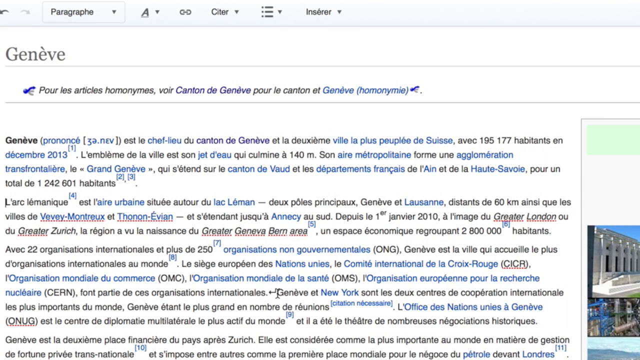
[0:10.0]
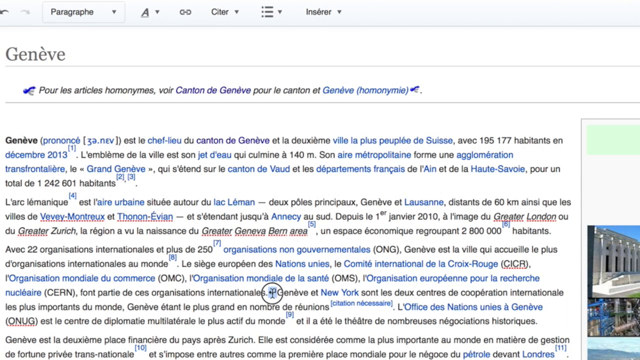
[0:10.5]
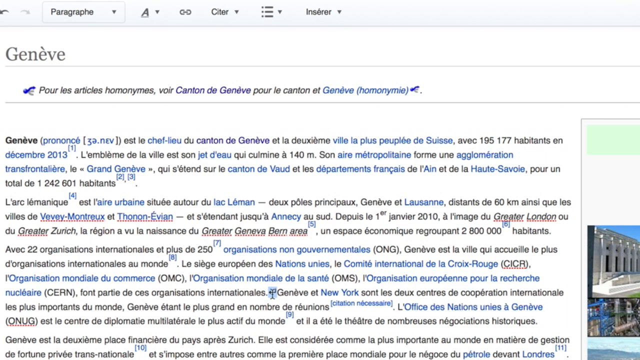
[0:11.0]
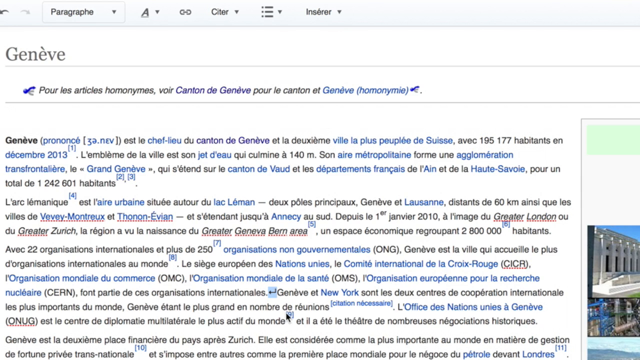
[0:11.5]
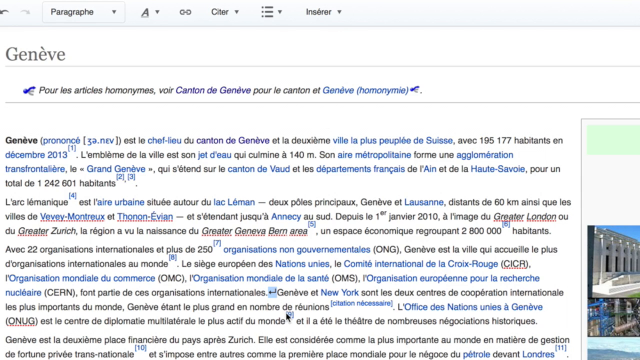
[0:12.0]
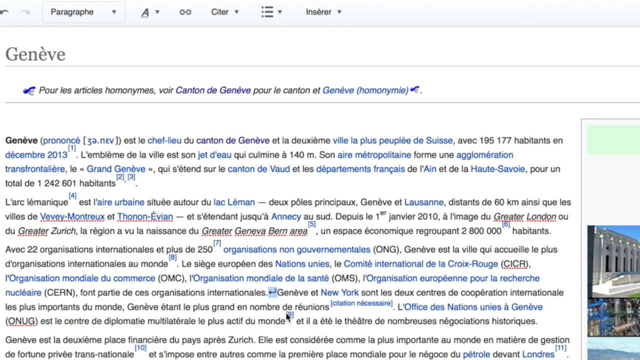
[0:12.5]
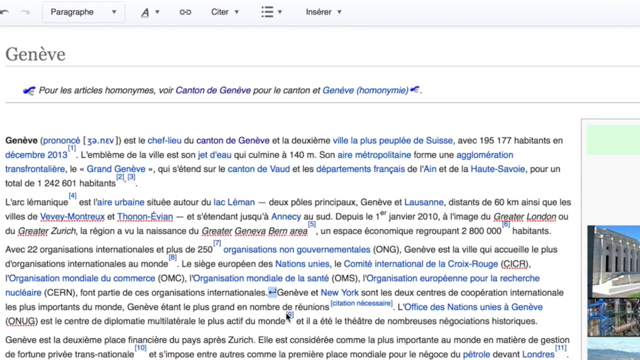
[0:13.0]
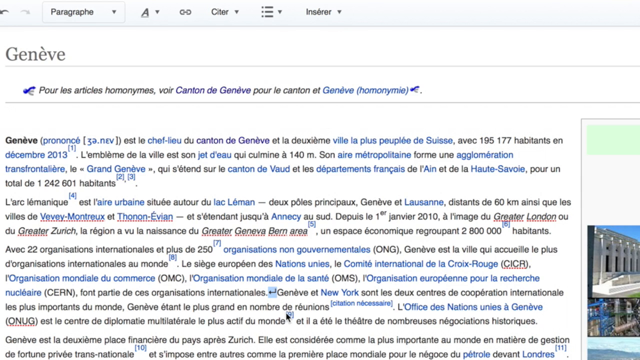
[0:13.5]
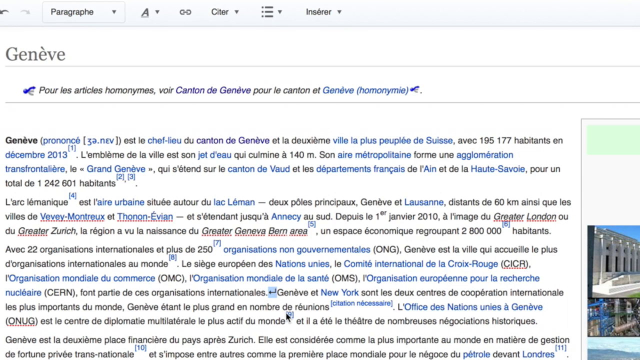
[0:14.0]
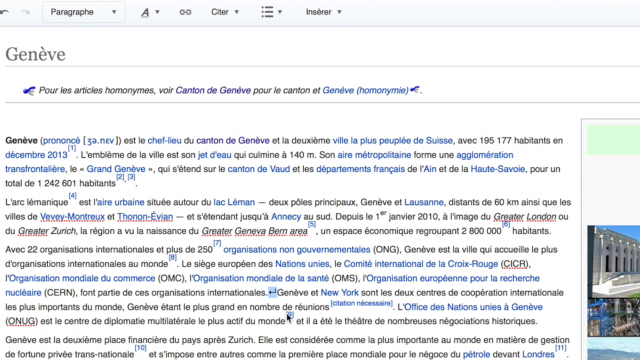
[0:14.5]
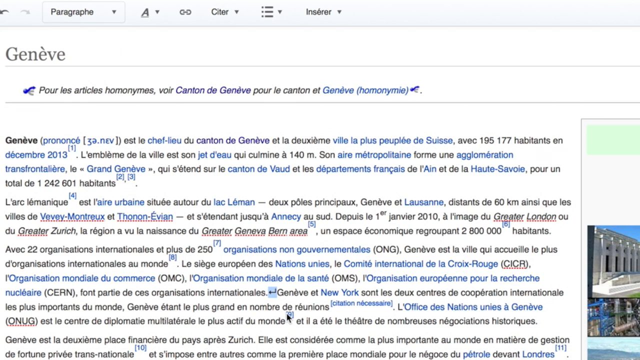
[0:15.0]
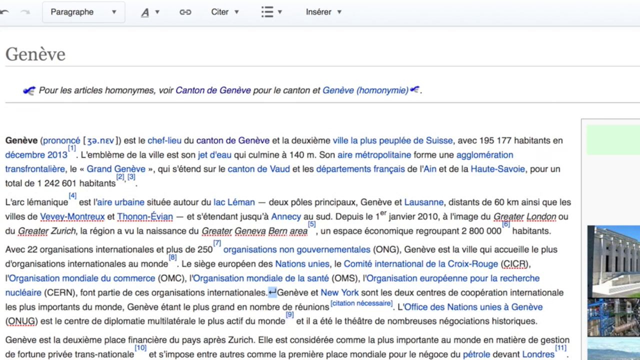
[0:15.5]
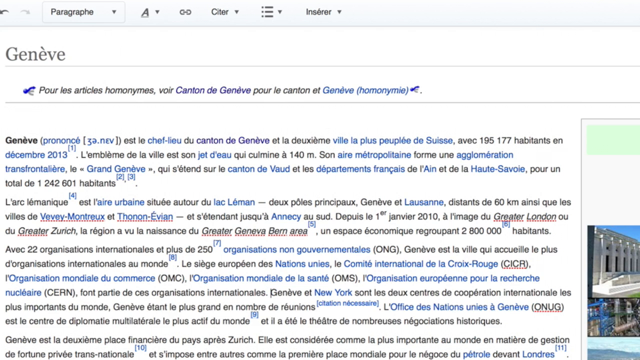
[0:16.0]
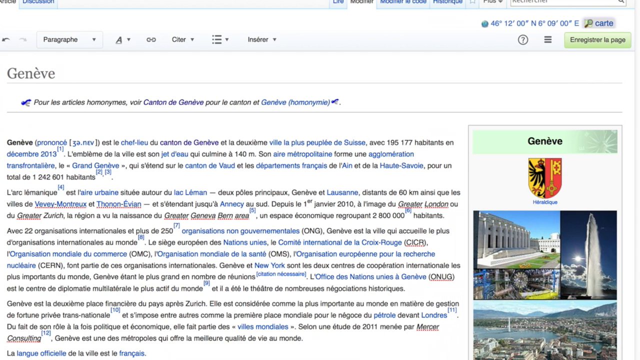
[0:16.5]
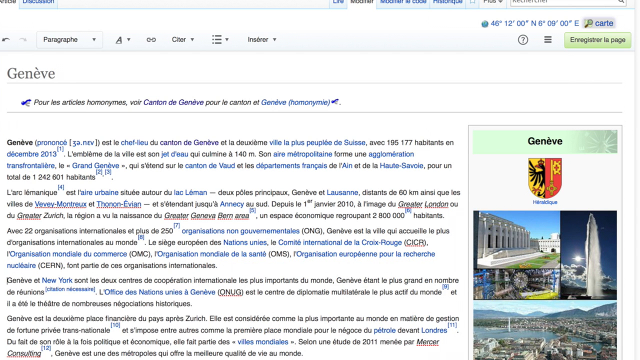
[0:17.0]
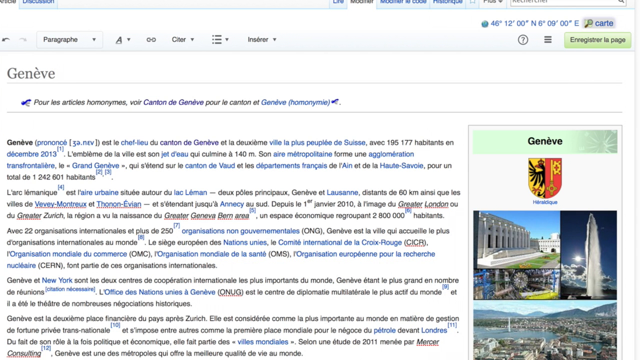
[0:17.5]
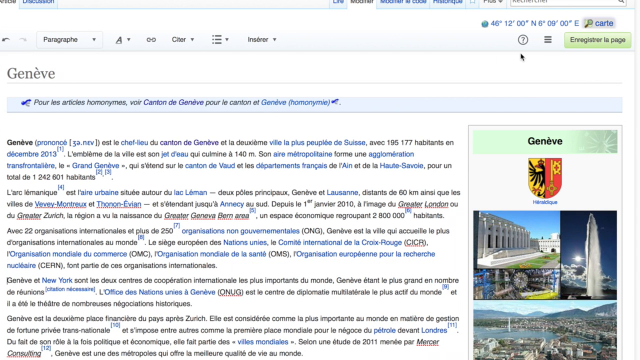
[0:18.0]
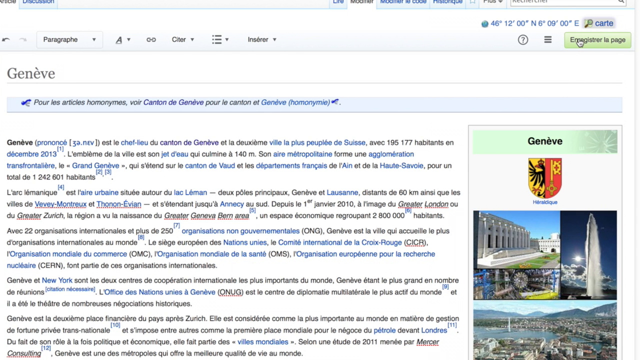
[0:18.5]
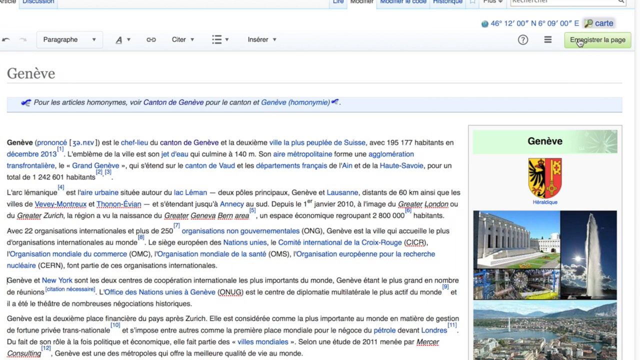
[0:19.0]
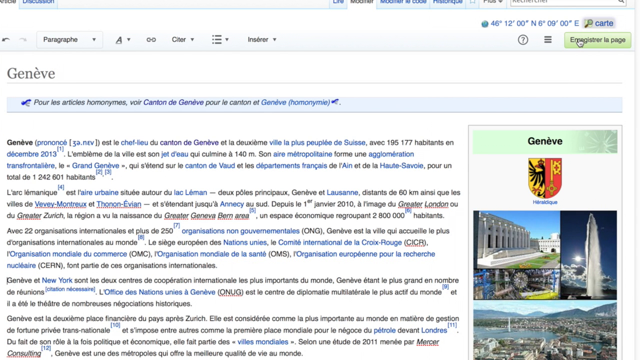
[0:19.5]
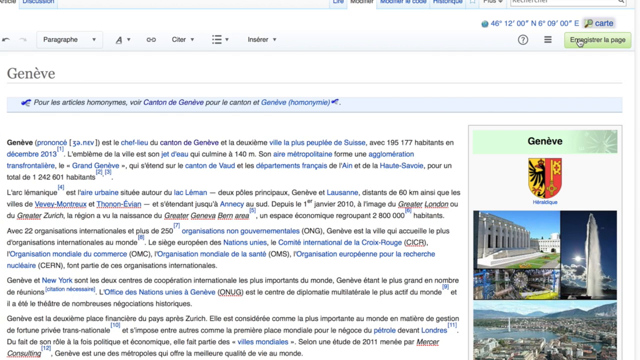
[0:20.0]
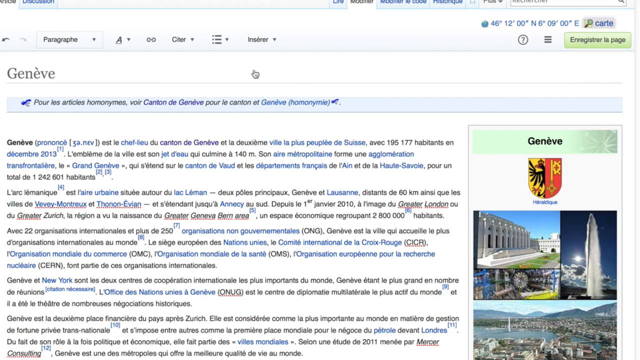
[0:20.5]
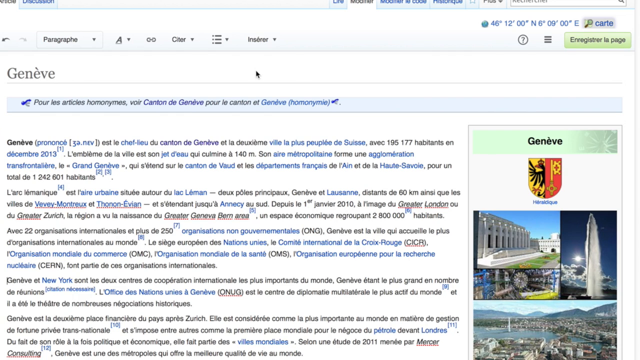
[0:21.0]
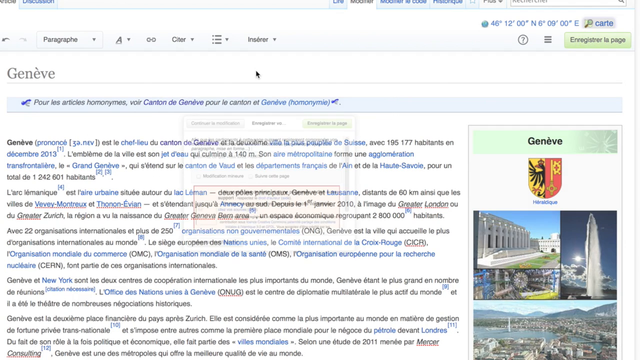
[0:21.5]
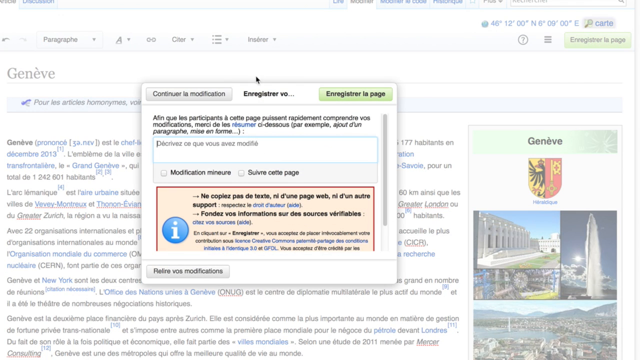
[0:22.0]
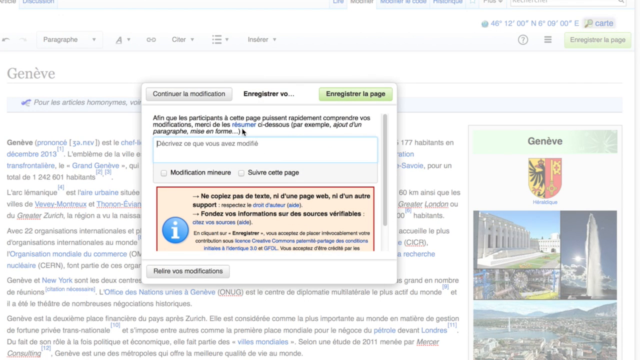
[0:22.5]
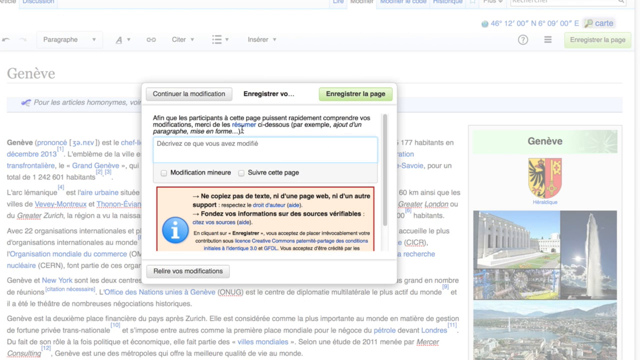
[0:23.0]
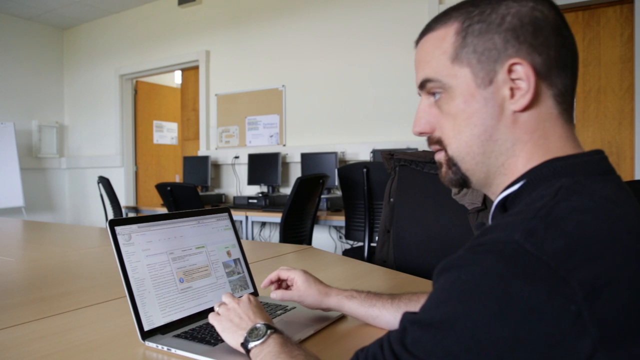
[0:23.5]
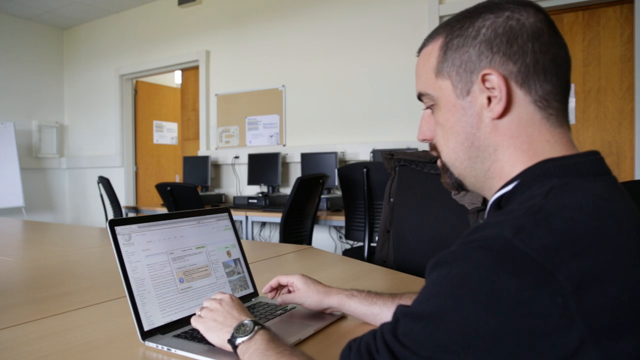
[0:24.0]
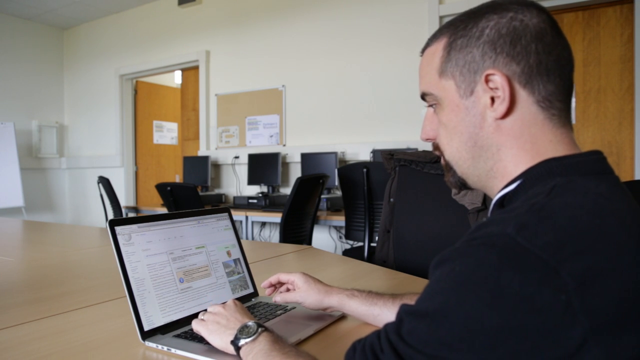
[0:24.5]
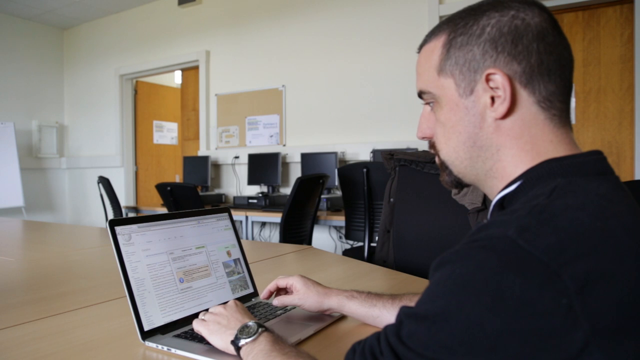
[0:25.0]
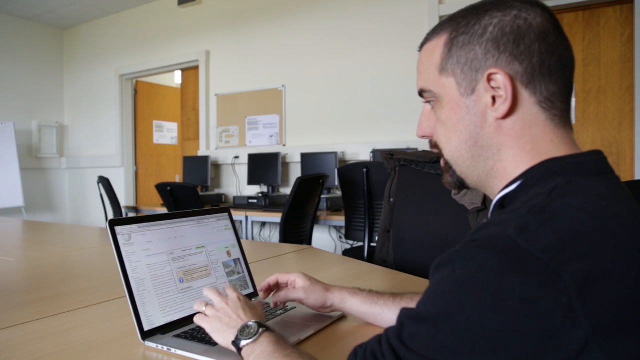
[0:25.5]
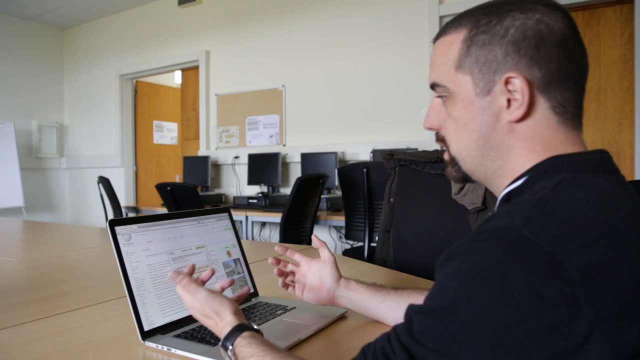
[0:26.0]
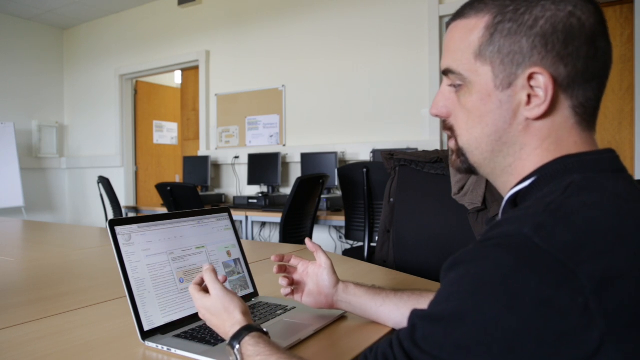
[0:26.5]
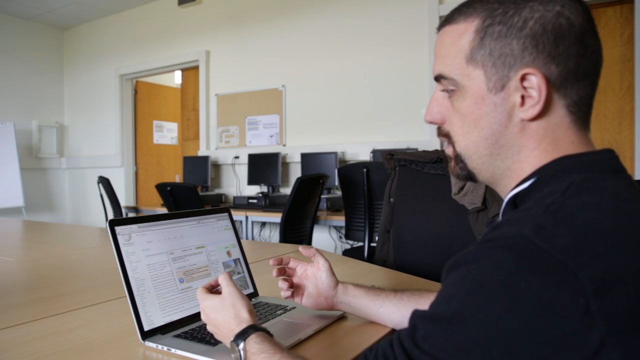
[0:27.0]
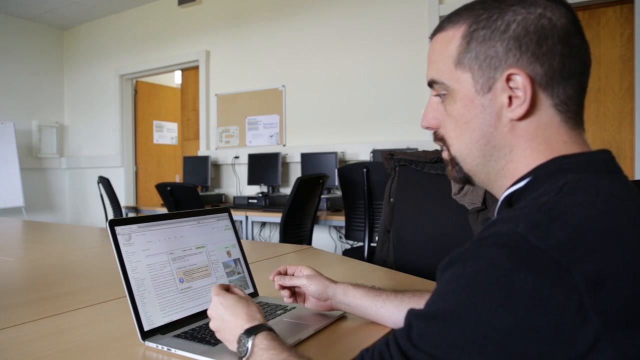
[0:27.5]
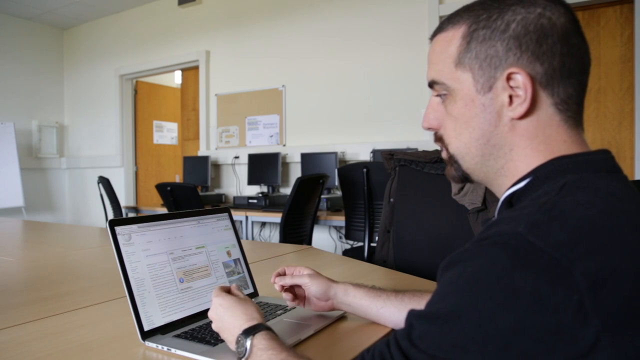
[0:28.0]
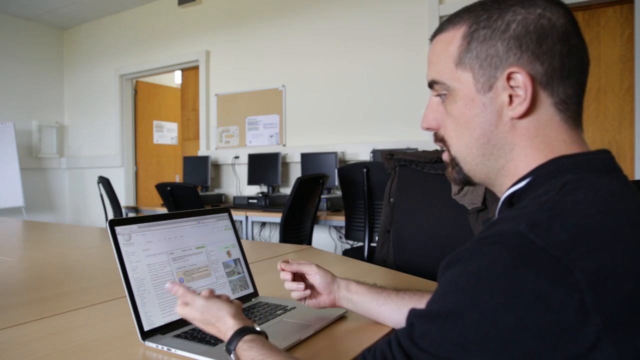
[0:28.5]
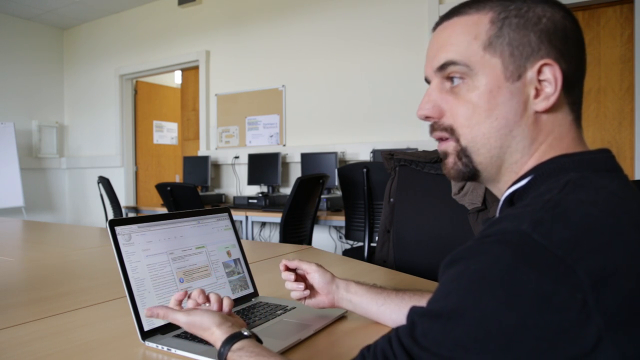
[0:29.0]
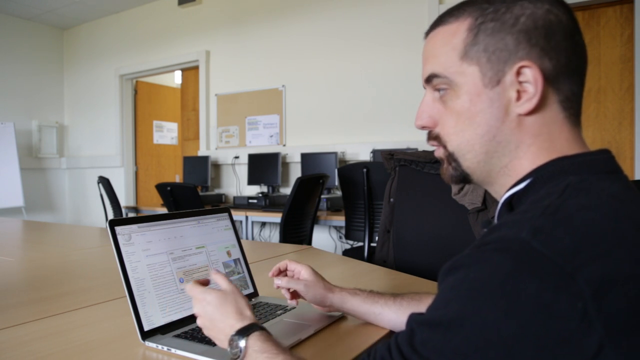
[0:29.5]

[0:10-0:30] The Geneva Wikipedia page is shown, with the mouse cursor moving around the screen. At one point the view zooms out so the pictures and the flag are easier to see. The cursor then moves again and clicks, bringing up a pop-up within the webpage that appears to be an error message of some sort. A green button is in the upper right corner, and in the middle of the page is a big red-orange box containing a phrase that appears to say "no copying text." There is also a blue eye icon on the page with the apparent error message. The pop-up goes away, and the Caucasian man with brown hair and a brown goatee, wearing a black polo shirt, is shown on the right side of the screen. He sits behind what appears to be a long wooden desk, his hands hovering over the keyboard of his computer.